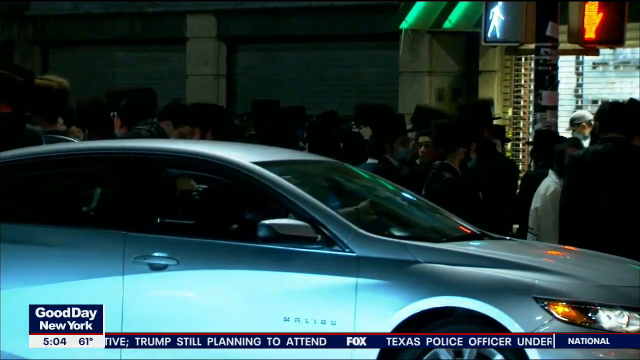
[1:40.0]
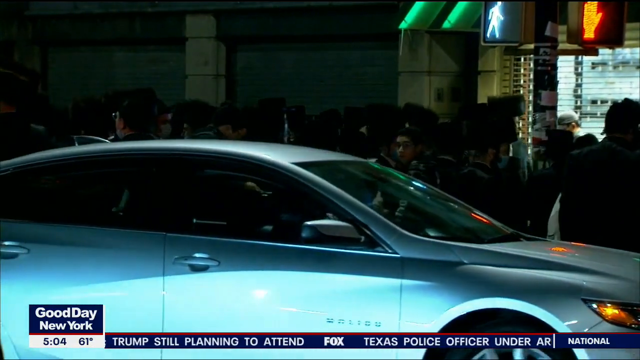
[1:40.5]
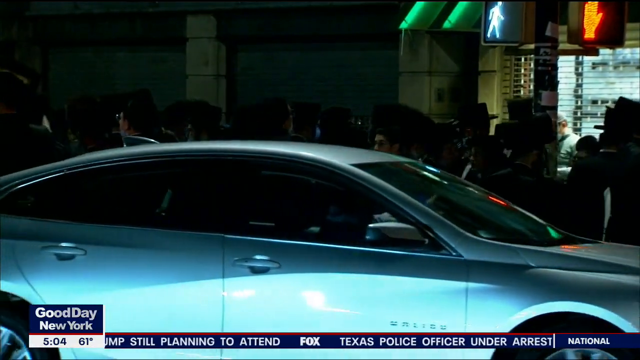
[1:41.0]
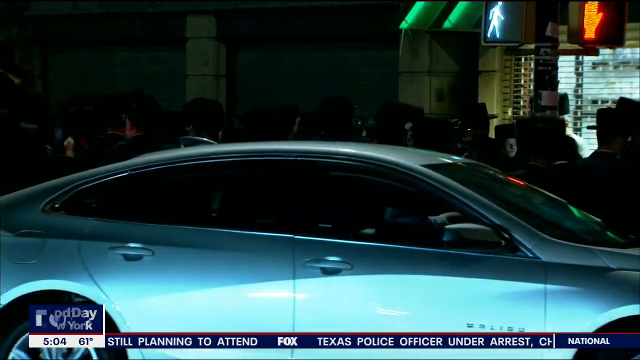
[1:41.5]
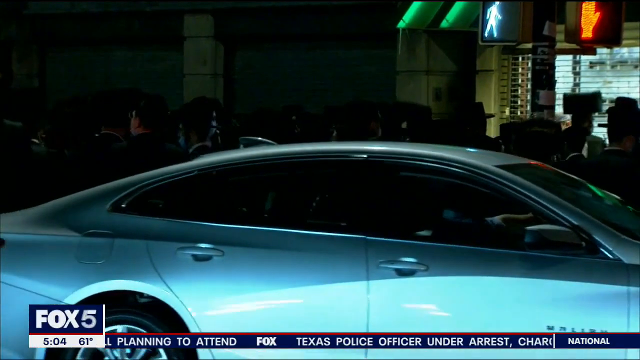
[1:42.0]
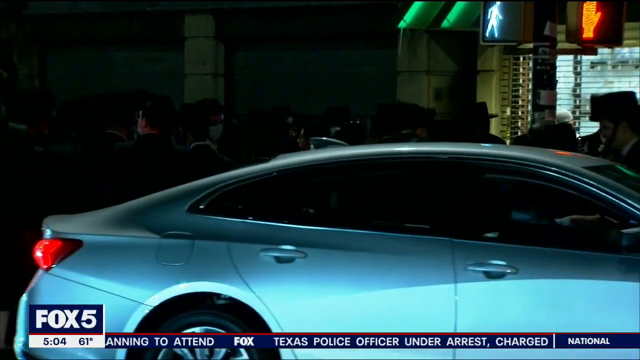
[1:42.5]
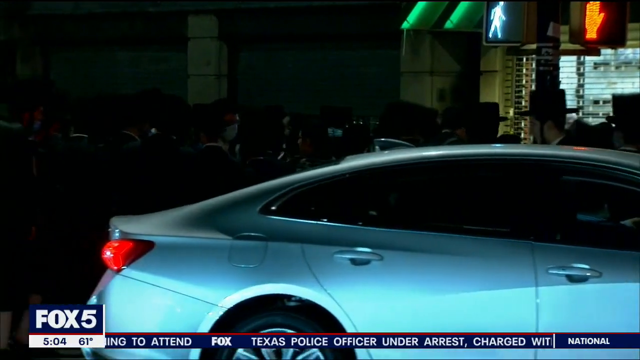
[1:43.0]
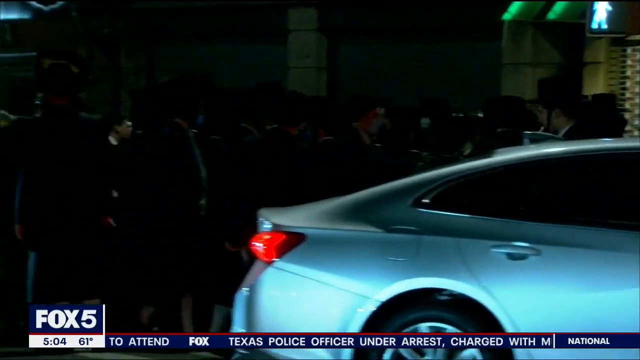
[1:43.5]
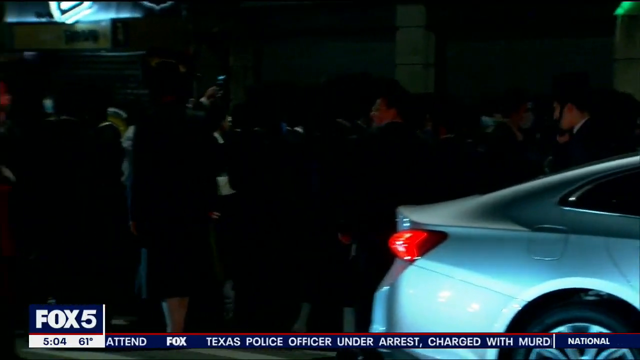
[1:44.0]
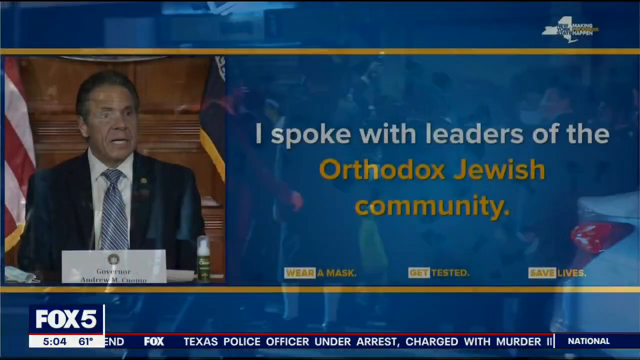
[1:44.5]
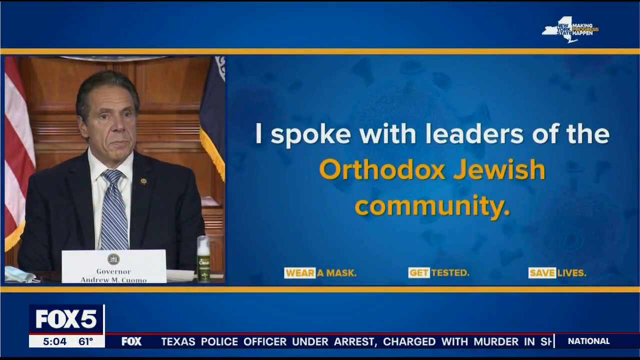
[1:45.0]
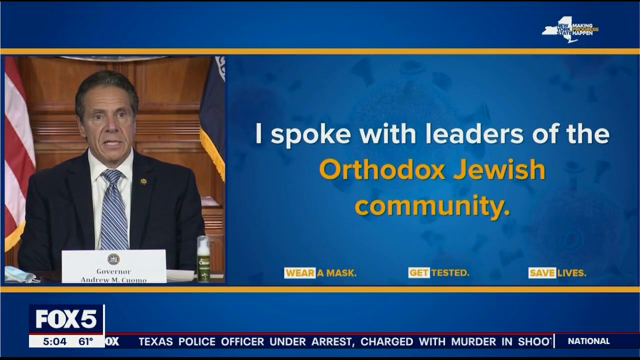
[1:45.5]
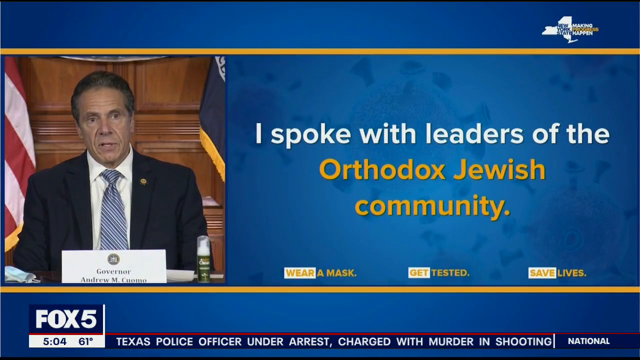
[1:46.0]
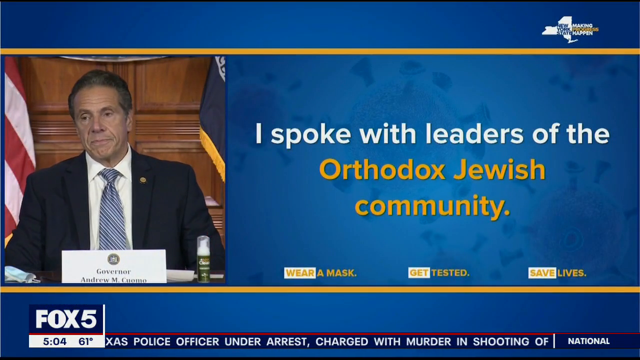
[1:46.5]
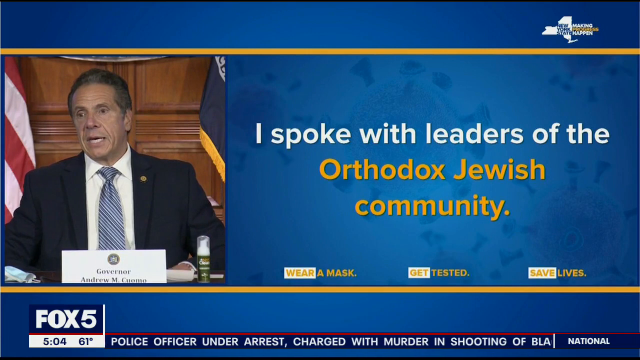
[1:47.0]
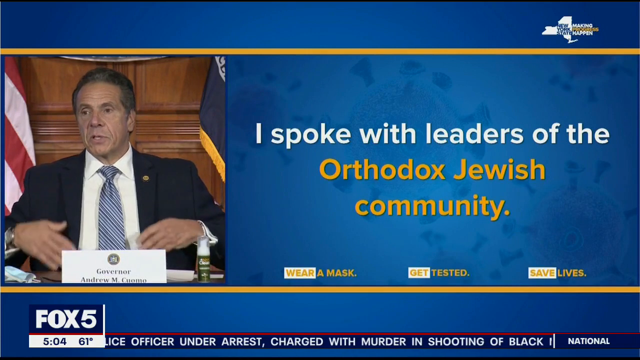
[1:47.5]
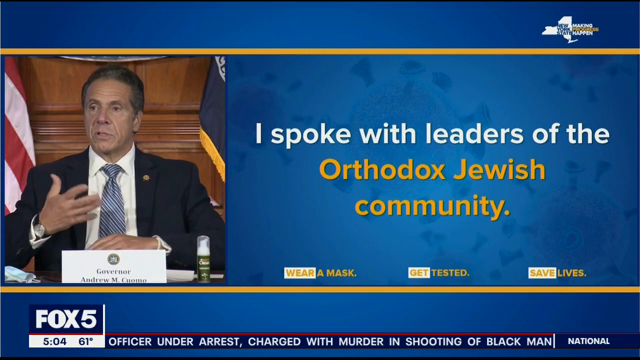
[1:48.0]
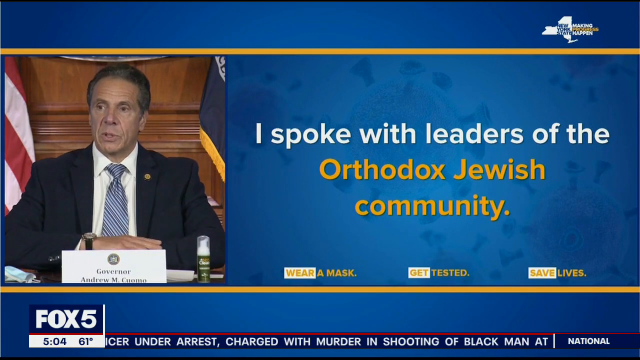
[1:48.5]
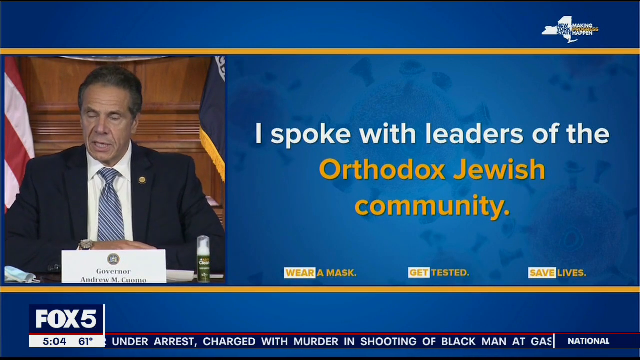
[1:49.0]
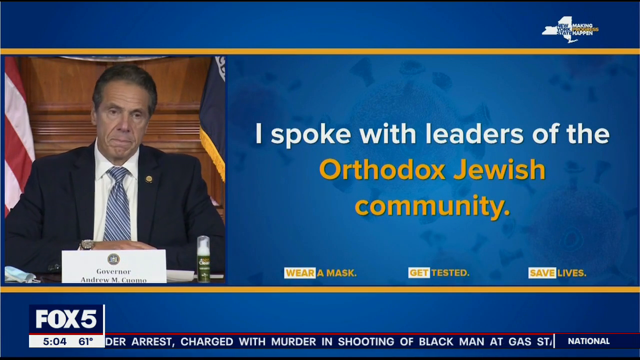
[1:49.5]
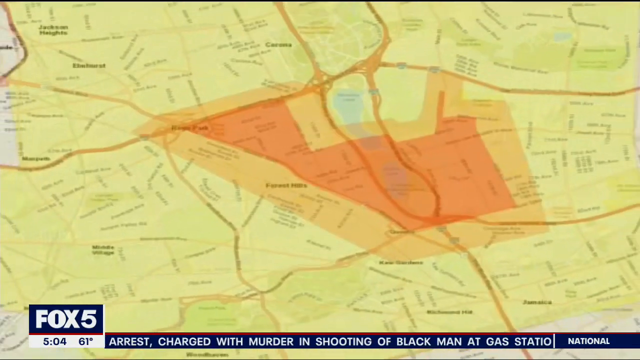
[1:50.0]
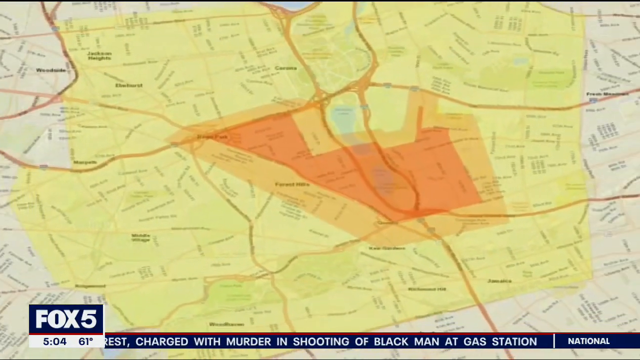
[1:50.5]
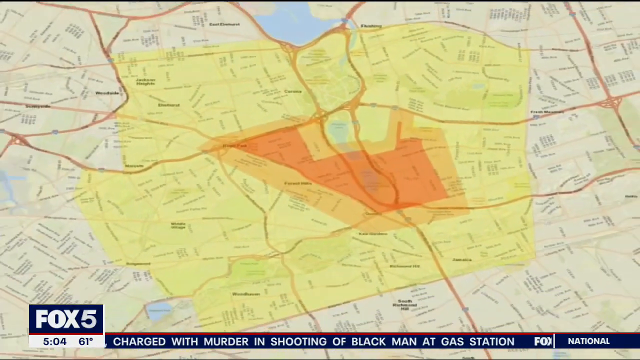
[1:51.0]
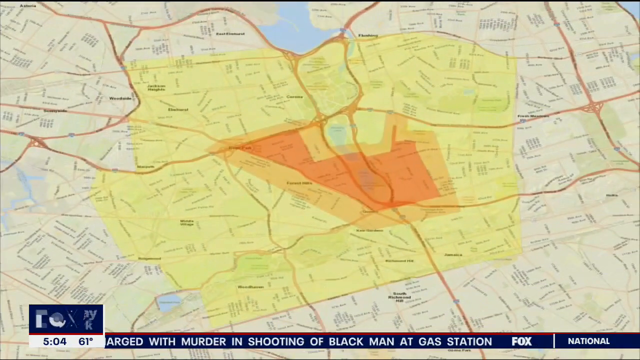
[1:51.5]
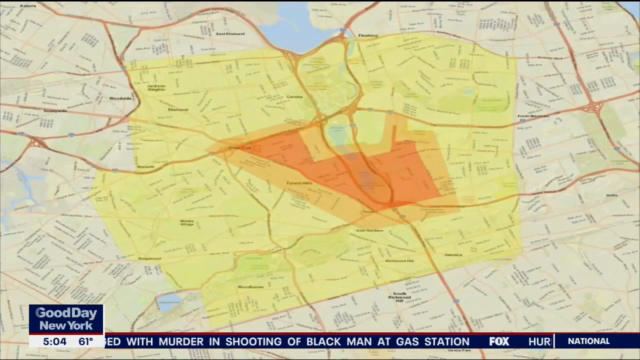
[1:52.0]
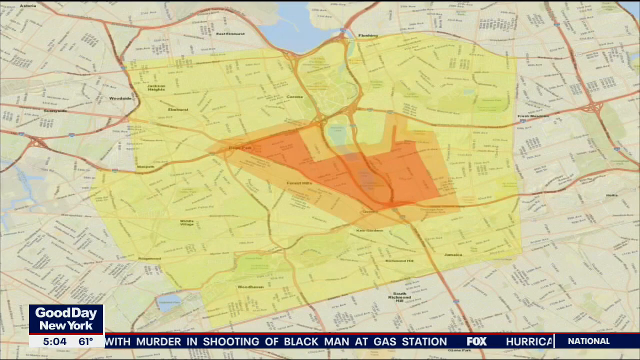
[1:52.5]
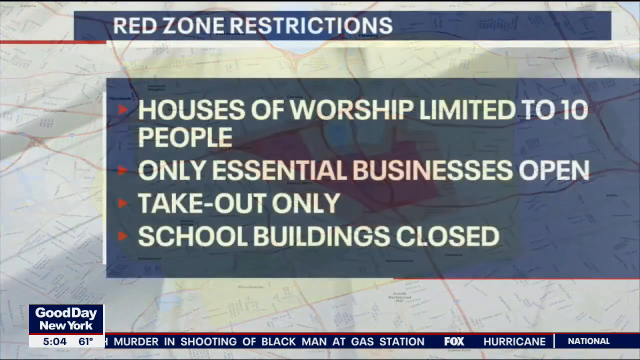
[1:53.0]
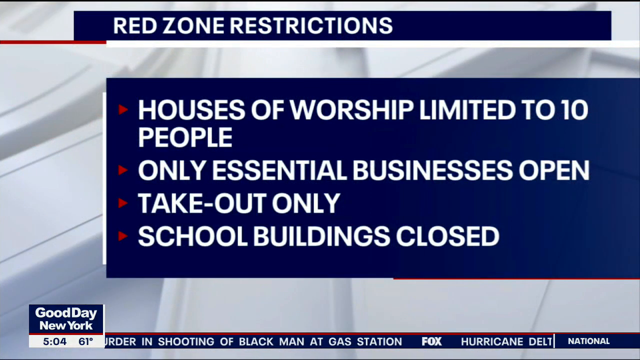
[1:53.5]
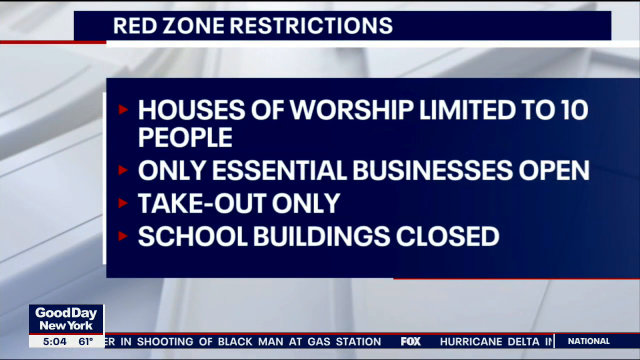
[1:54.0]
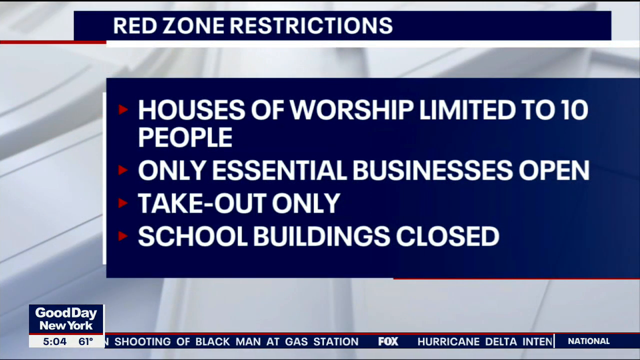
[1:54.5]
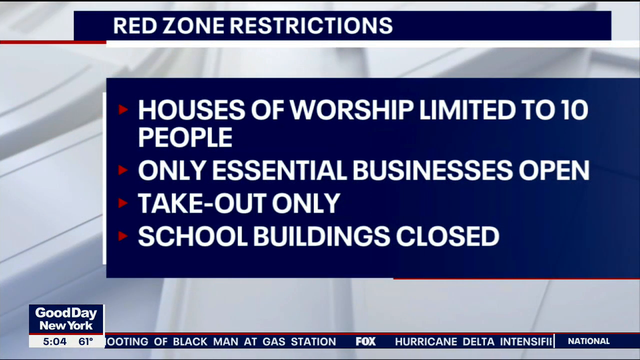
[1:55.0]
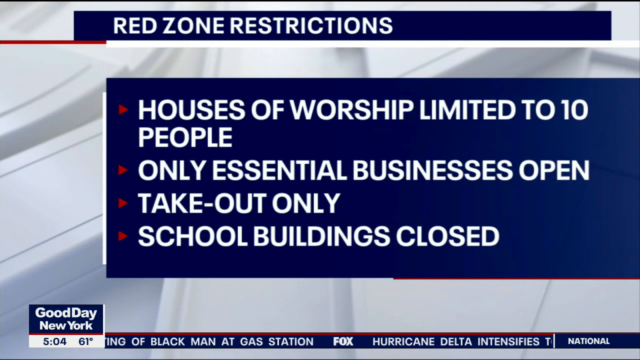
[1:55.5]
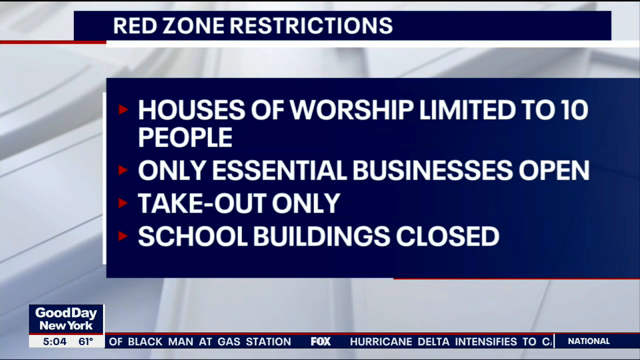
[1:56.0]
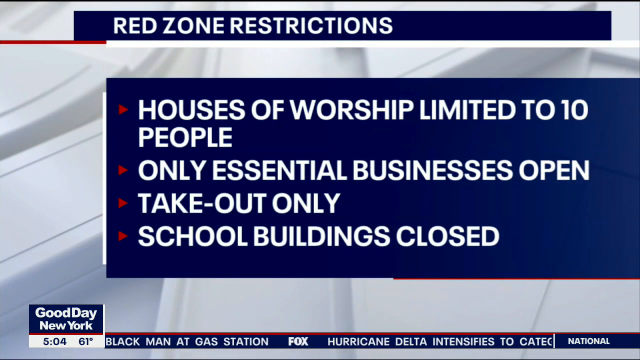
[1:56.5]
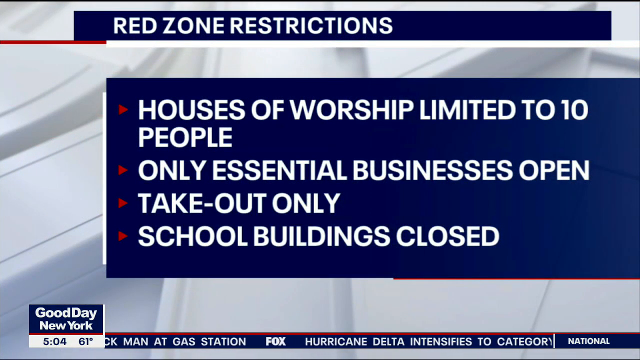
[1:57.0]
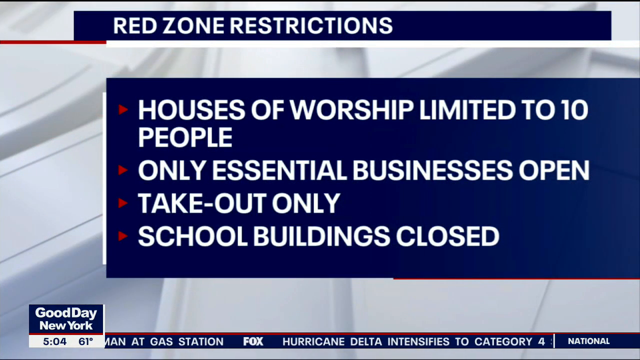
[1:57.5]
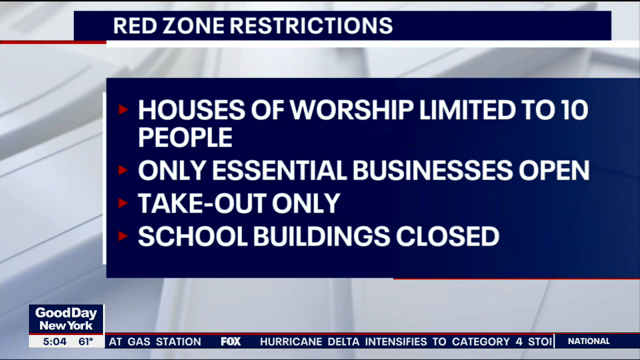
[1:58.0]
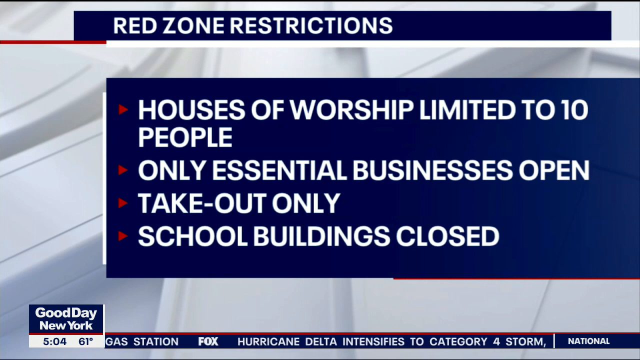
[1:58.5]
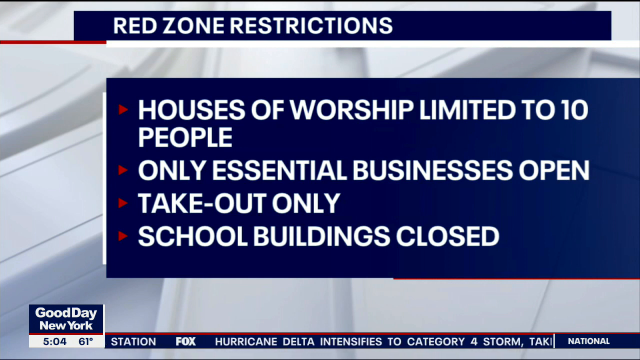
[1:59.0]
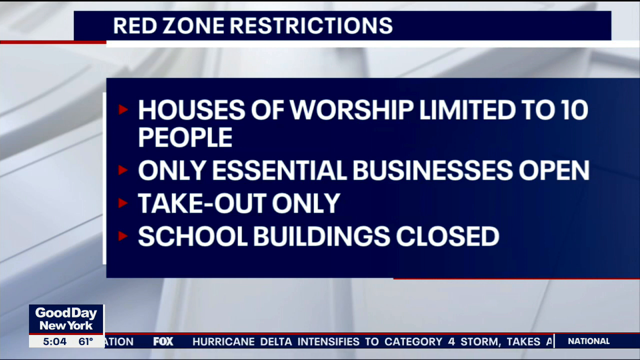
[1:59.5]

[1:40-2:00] The camera moves to the left, away from the car. The video returns to the image of the governor, but instead of the synagogue image, the right side shows a quote from the governor: in white writing it reads "I spoke with the leaders of the", and below that in yellow writing "orthodox Jewish community". The governor lifts his hands up with the palms facing his chest, pulls them back down onto the table, then lifts one to make a point. A map of New York appears: the area of Brooklyn in the centre is dark red, with an orange blob outside it and yellow outside that. A slide appears with the white Fox logo background used previously. A header in a long navy rectangle reads "red zone restrictions" in white text. Bullet points with red arrows in a large, bold white font follow, including "houses of worship limited to 10 people", "essential businesses open" and "school buildings closed". The slide remains on screen long enough to be read.